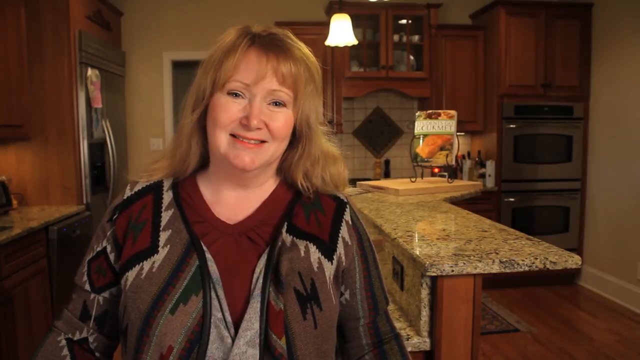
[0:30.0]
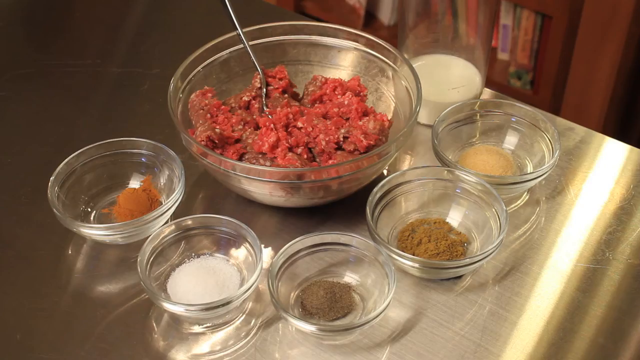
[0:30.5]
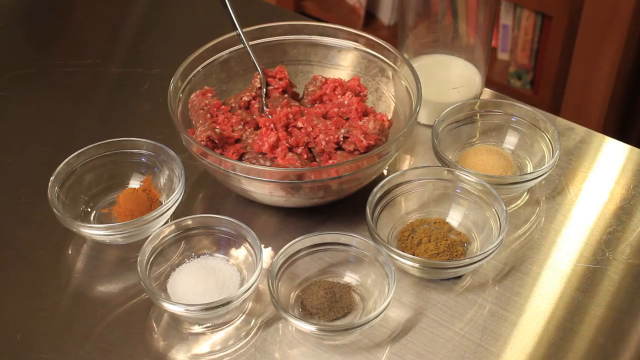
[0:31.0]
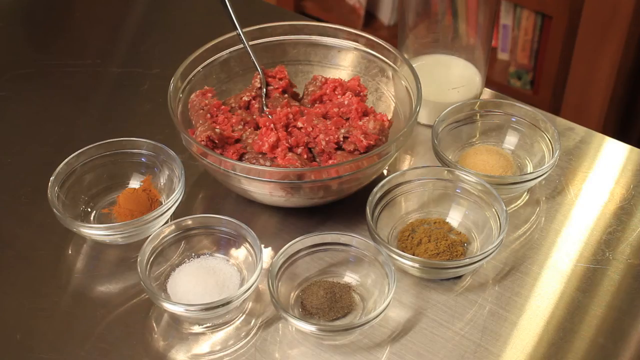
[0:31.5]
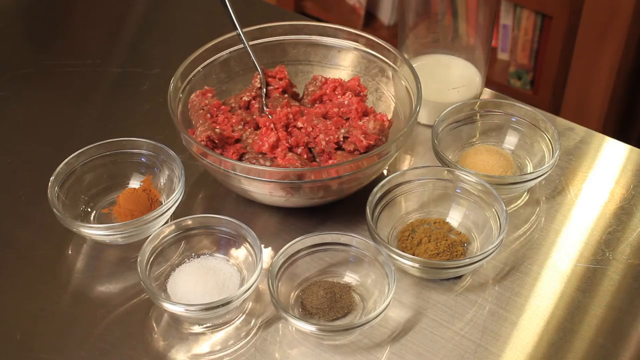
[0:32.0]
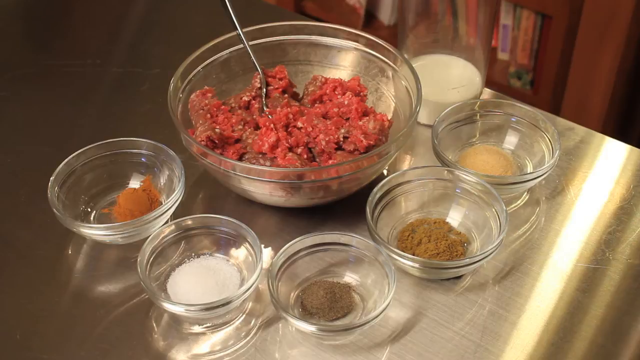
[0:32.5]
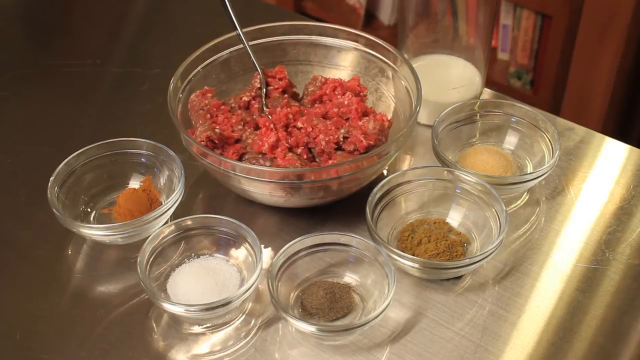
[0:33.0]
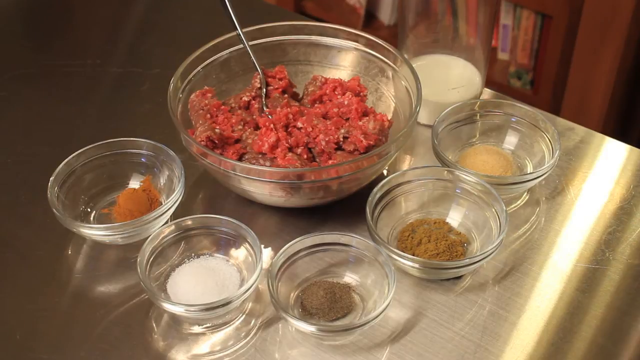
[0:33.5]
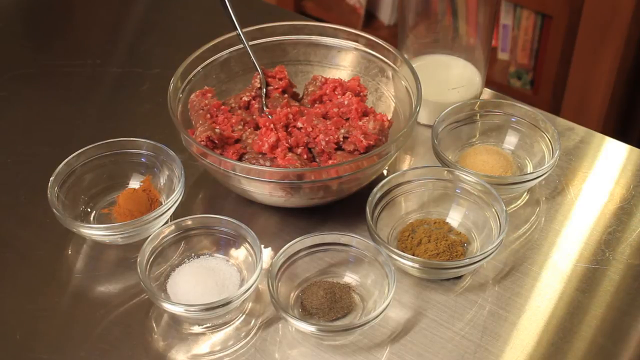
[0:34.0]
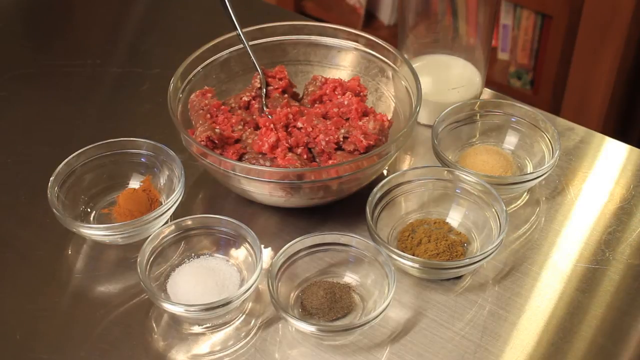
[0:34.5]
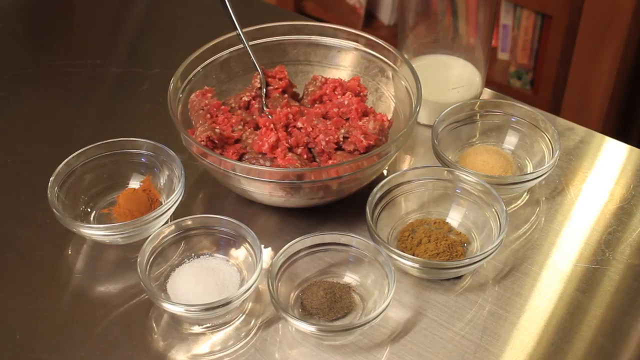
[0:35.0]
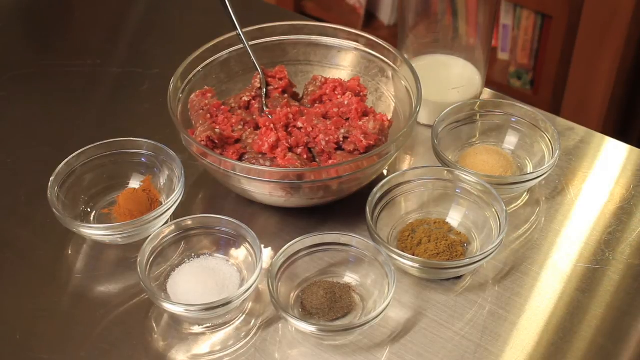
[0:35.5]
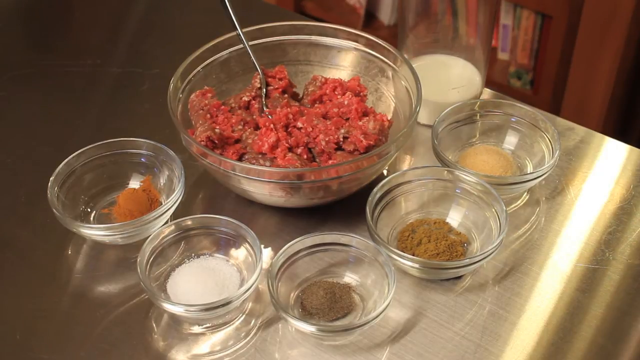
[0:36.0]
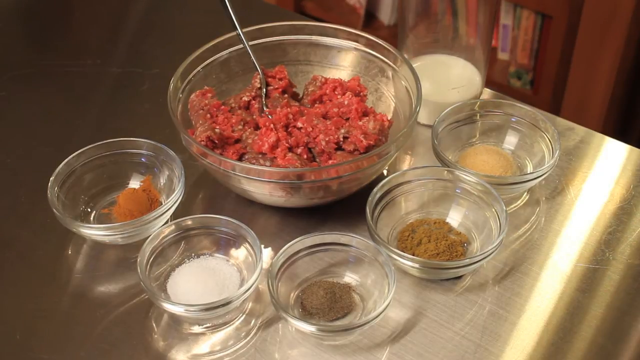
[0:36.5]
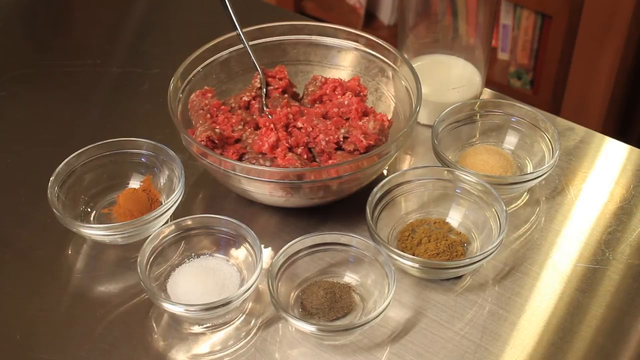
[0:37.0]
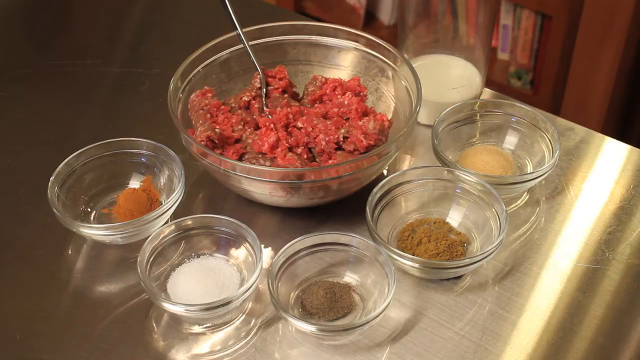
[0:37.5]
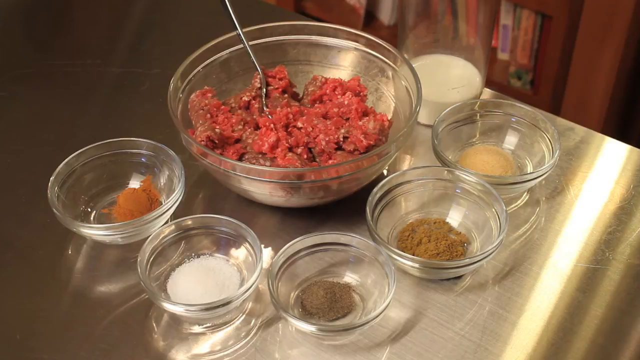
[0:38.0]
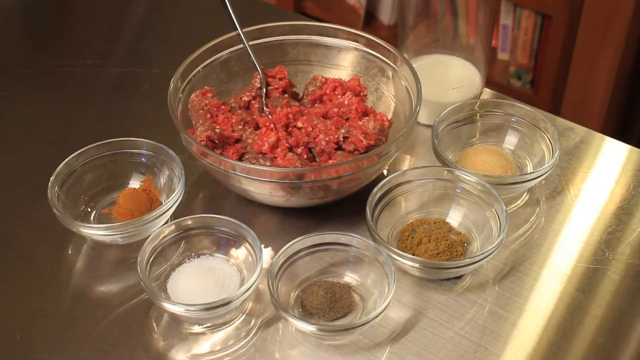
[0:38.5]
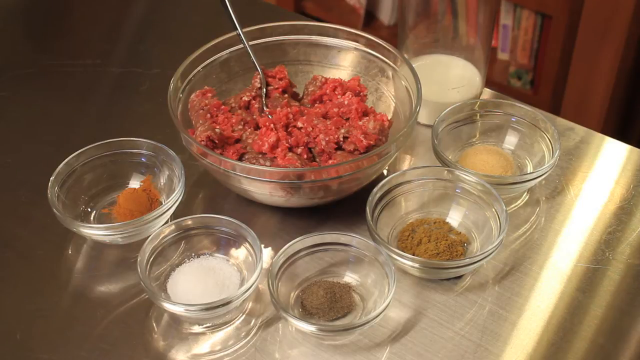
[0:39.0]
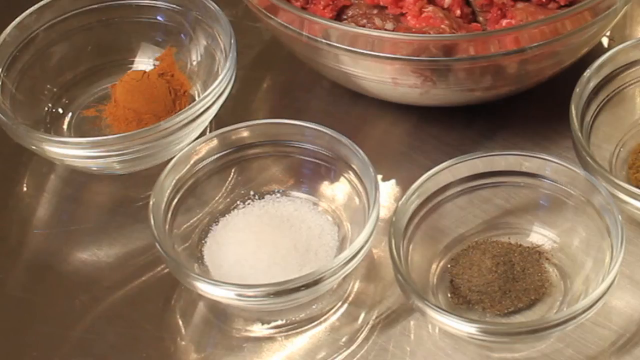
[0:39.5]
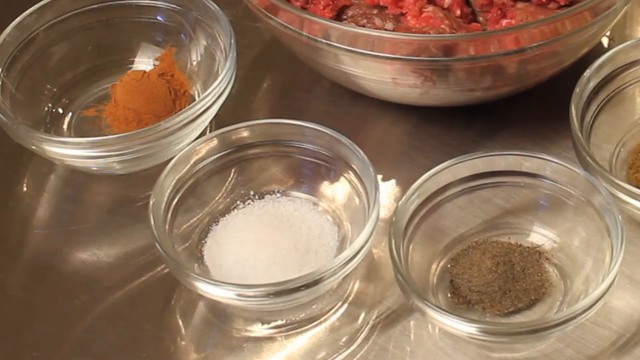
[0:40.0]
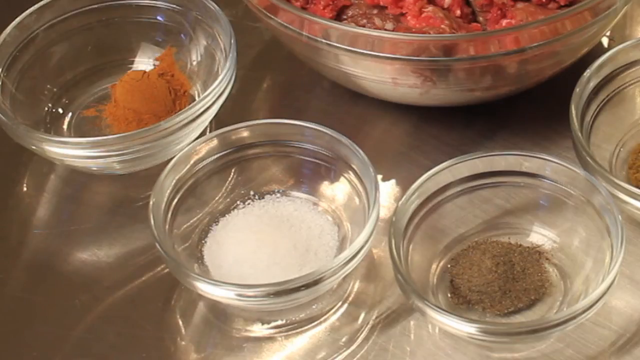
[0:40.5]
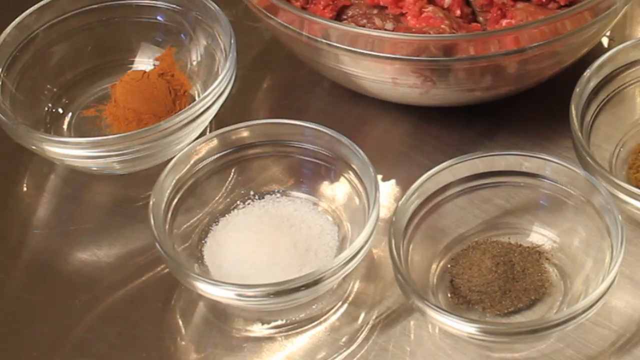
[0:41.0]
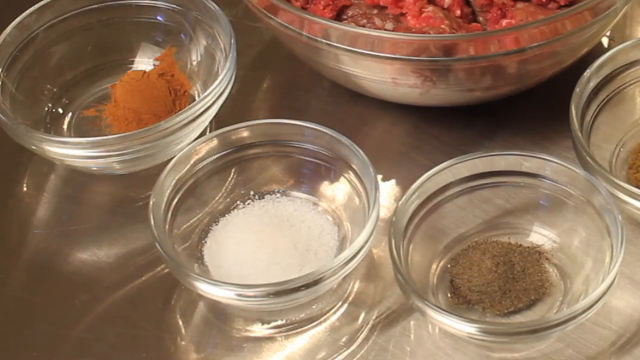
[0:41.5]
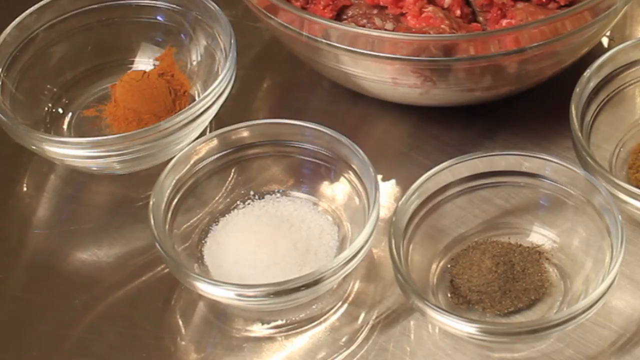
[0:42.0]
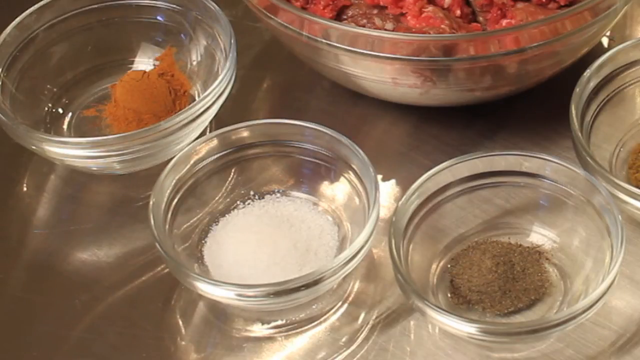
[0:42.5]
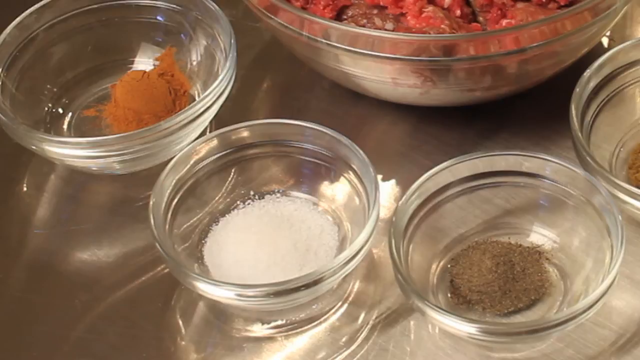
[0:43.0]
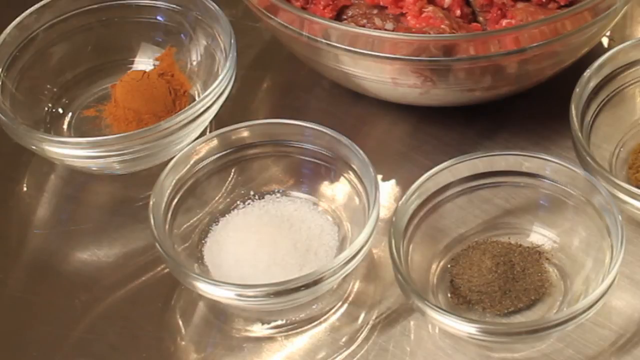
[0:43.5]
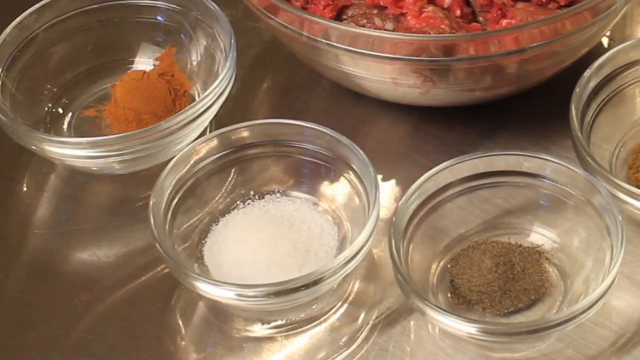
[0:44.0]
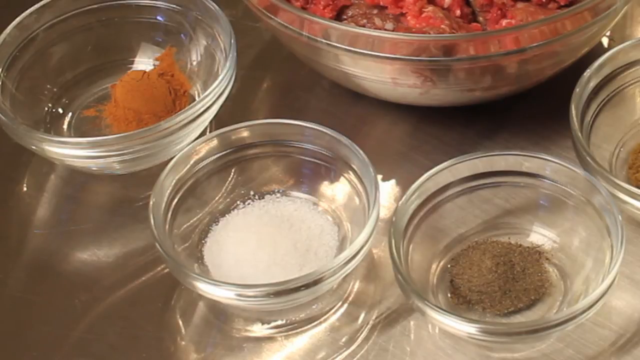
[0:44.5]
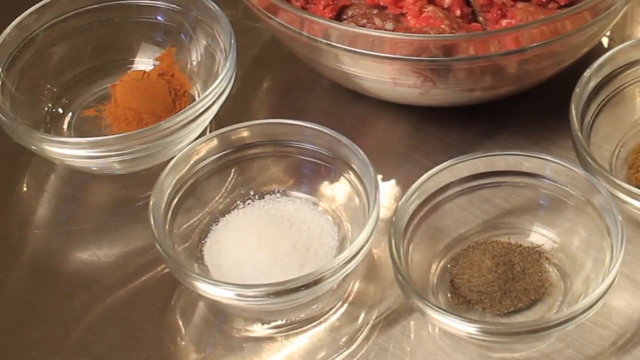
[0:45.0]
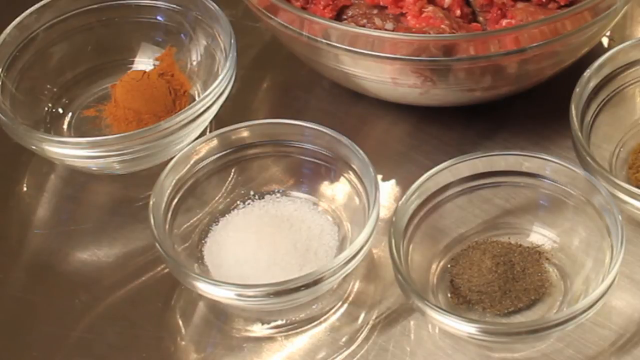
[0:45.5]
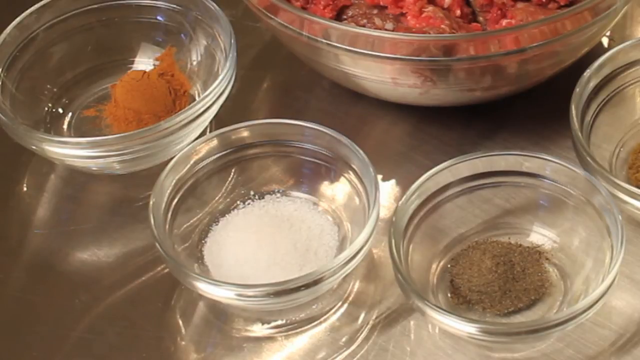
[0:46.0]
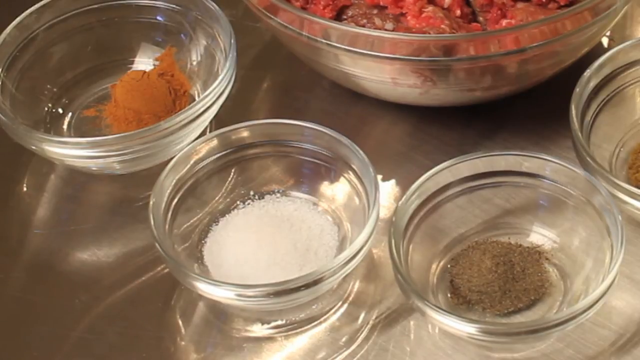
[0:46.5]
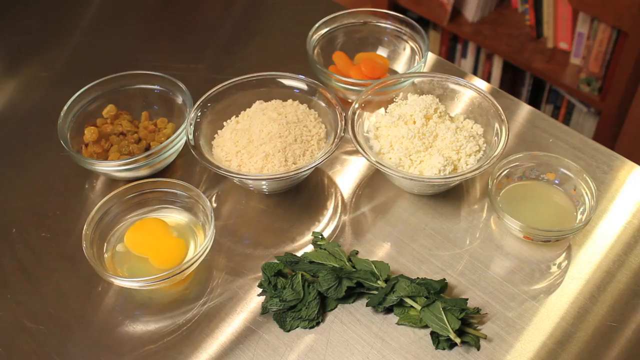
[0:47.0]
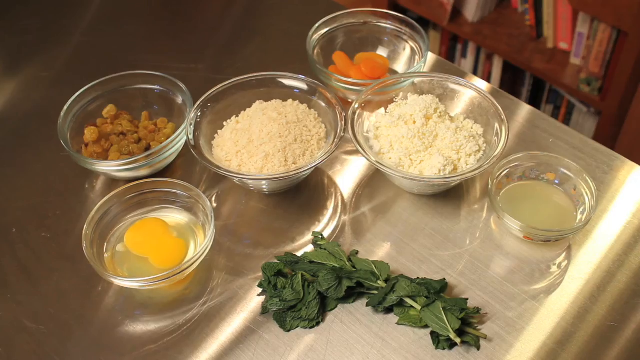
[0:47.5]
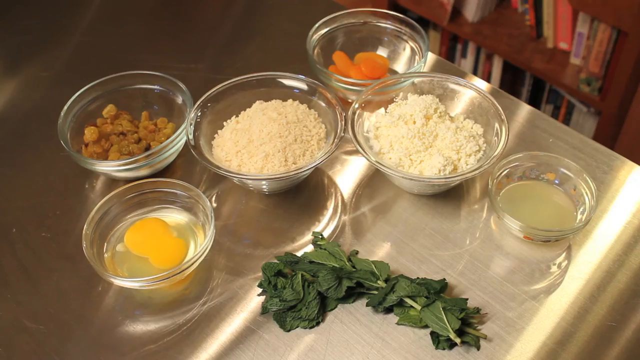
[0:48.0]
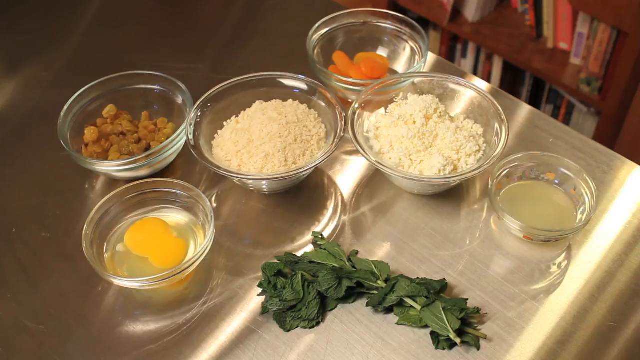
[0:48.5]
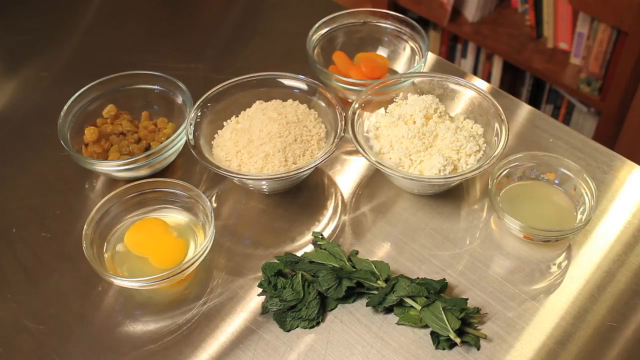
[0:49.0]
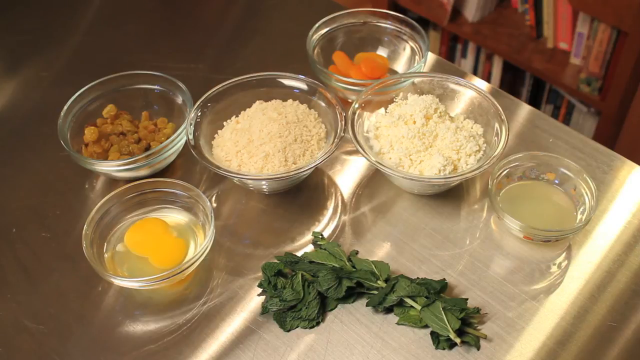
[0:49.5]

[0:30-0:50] The woman is sitting in her kitchen, smiling at the camera. The scene transitions to several clear bowls of ingredients: one of ground beef, five or six bowls of spices, and what looks to be a jug of milk. The camera zooms in on a couple of the spices. It then moves to a different part of the stainless steel table with other ingredients: one looks to be melted butter, one looks to be eggs, one is maybe parmesan, and possibly flour. No on-screen text identifies the ingredients. Rather than moving video, this part seems to be a still picture with zooms into certain sections.